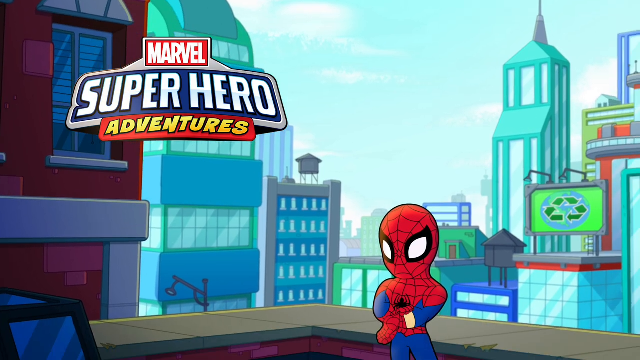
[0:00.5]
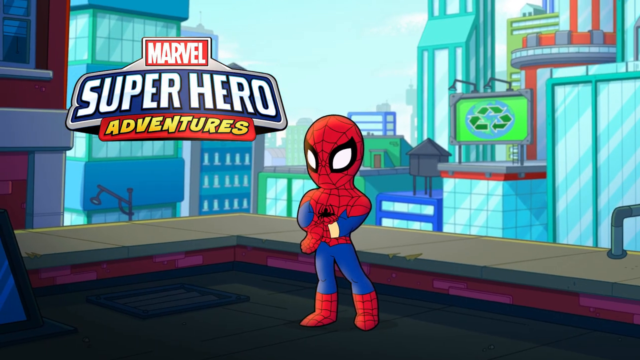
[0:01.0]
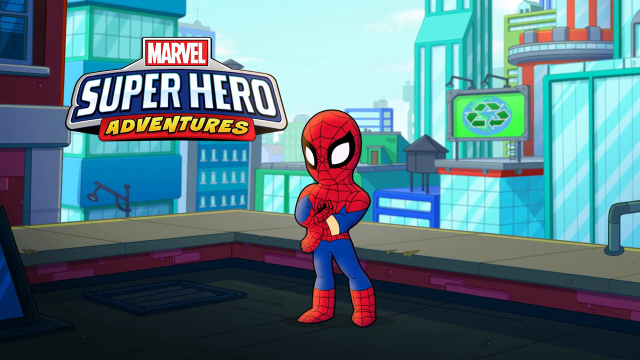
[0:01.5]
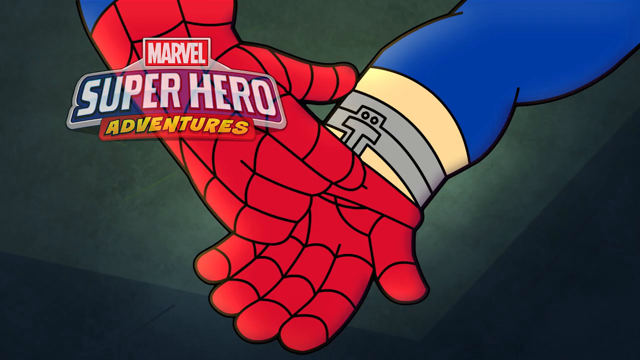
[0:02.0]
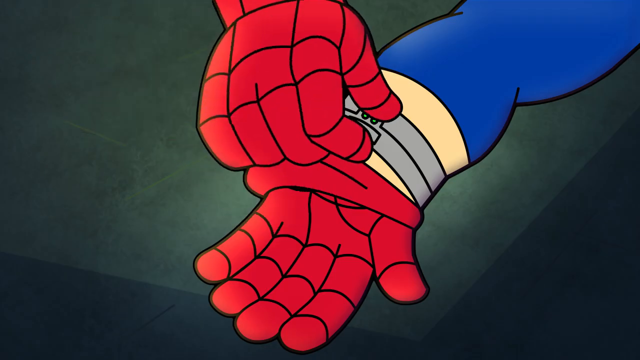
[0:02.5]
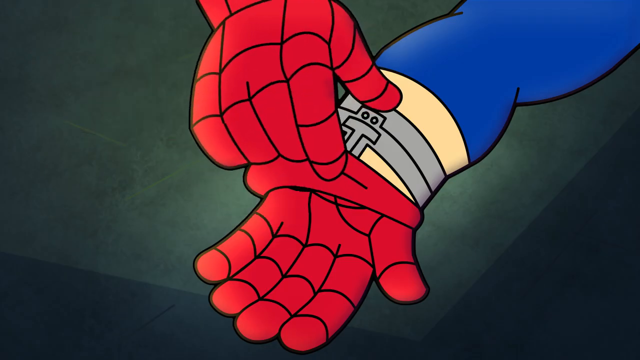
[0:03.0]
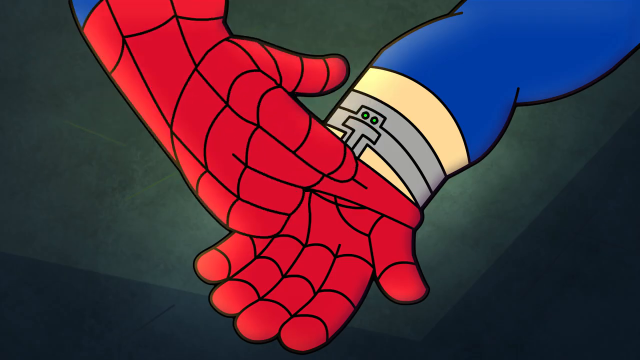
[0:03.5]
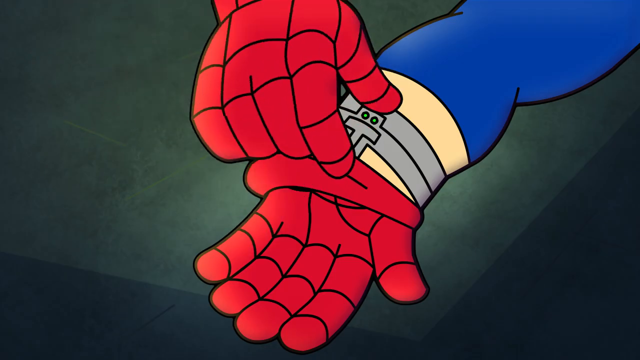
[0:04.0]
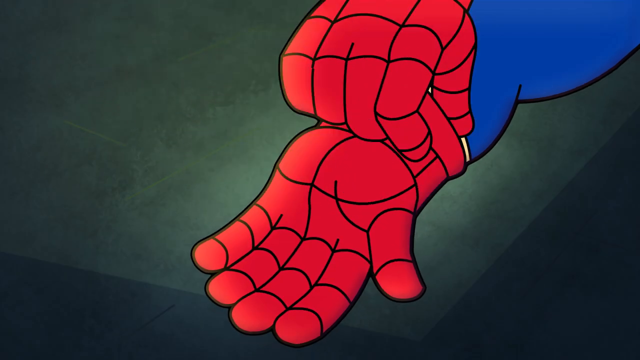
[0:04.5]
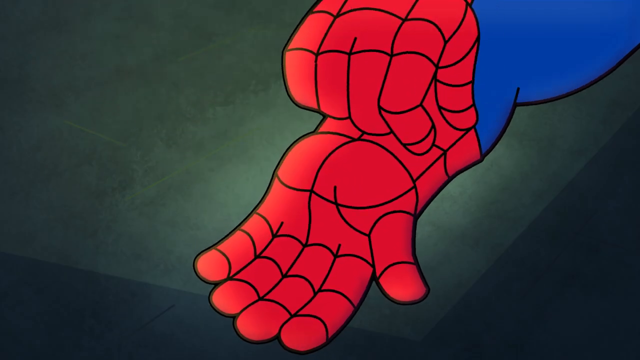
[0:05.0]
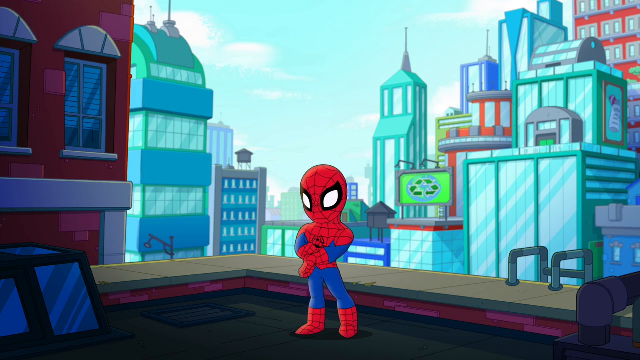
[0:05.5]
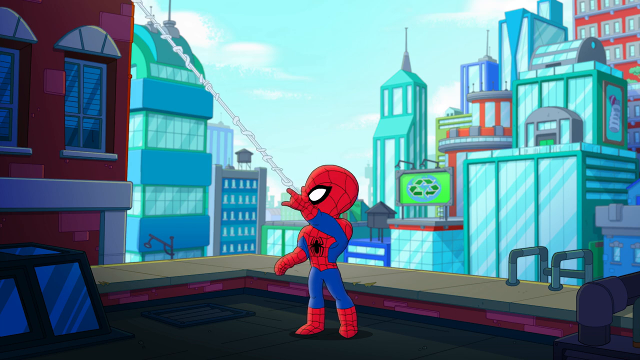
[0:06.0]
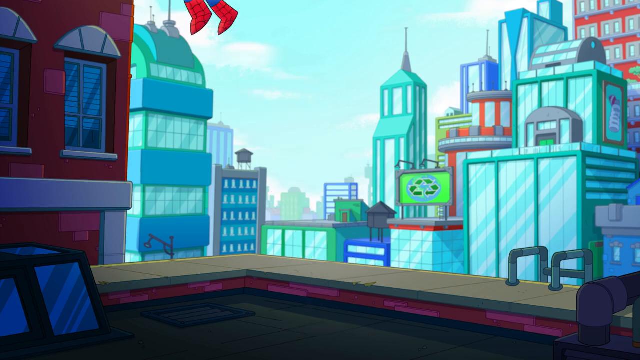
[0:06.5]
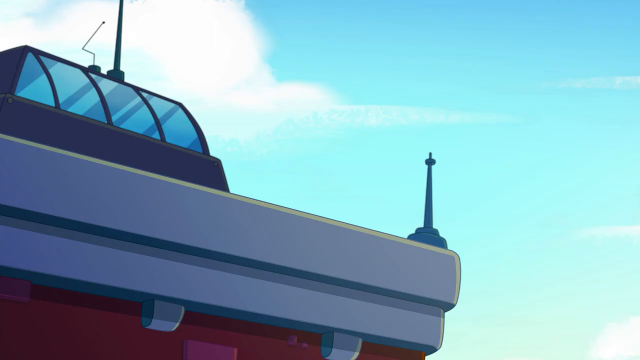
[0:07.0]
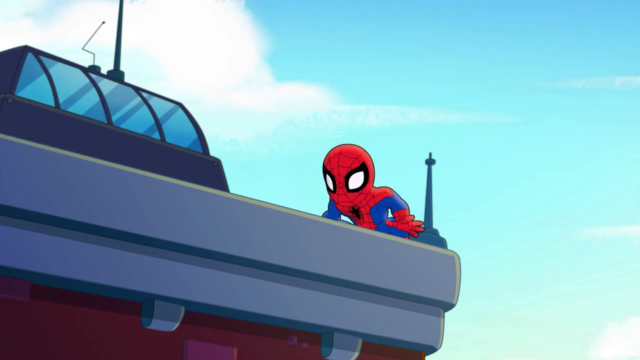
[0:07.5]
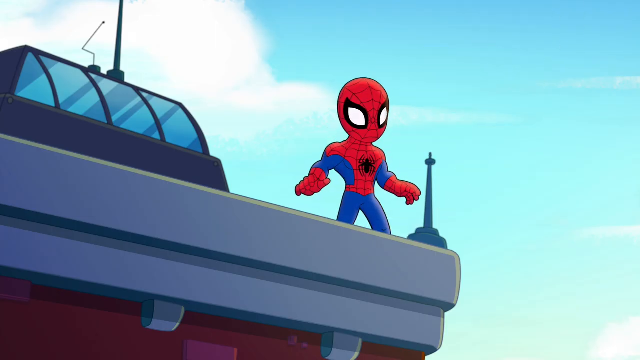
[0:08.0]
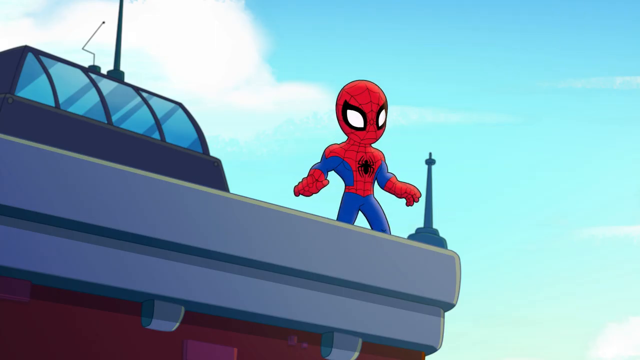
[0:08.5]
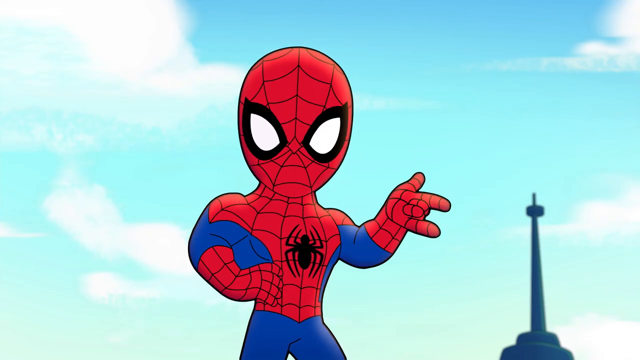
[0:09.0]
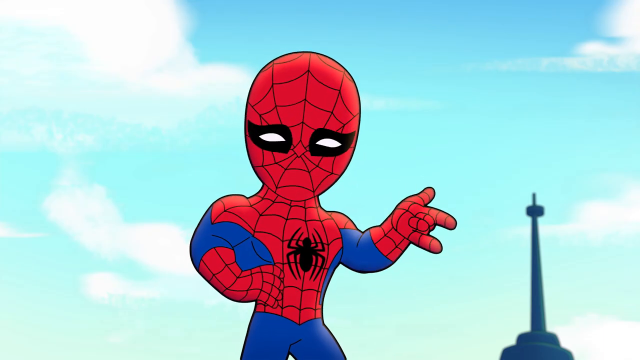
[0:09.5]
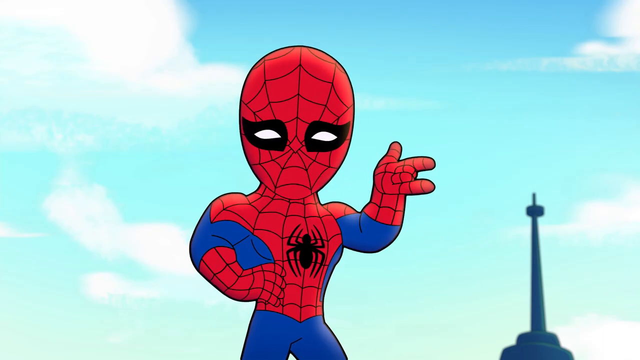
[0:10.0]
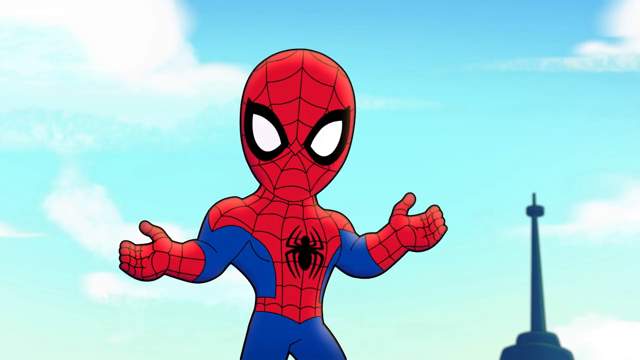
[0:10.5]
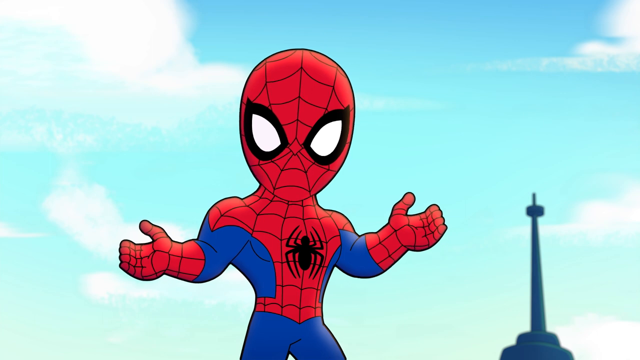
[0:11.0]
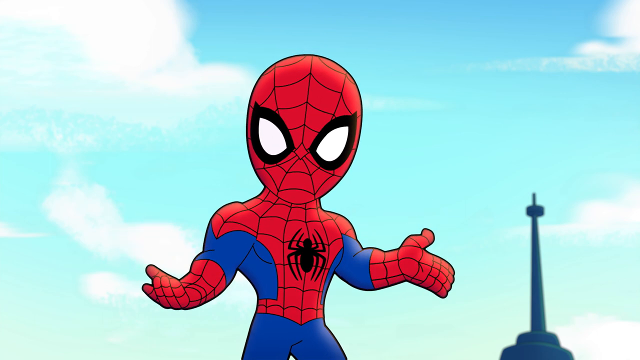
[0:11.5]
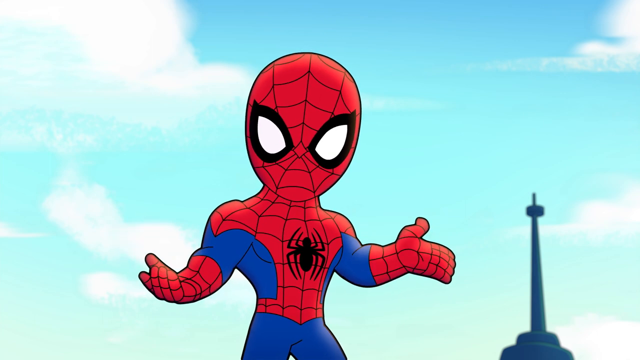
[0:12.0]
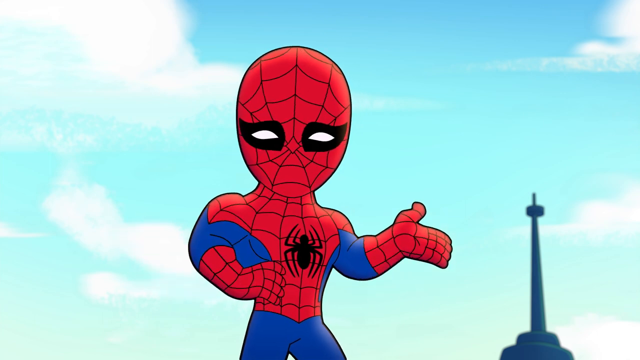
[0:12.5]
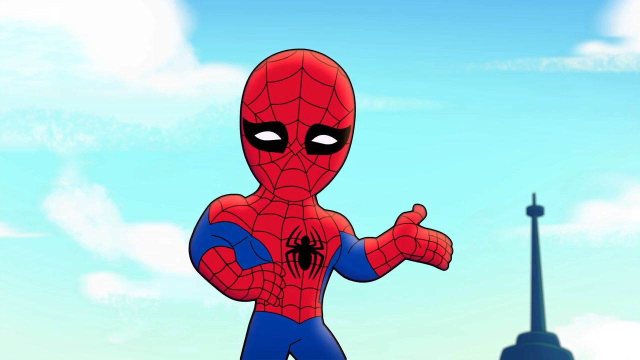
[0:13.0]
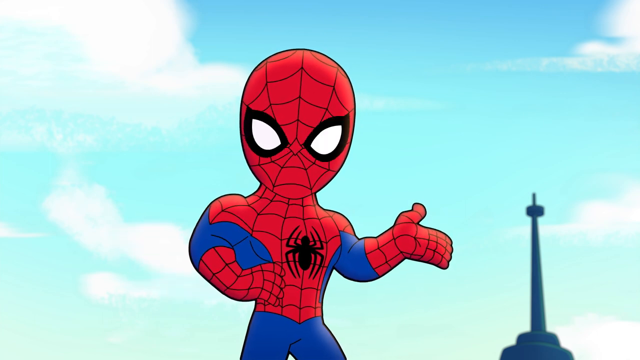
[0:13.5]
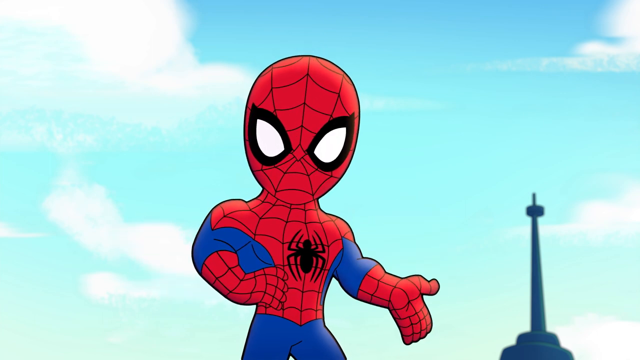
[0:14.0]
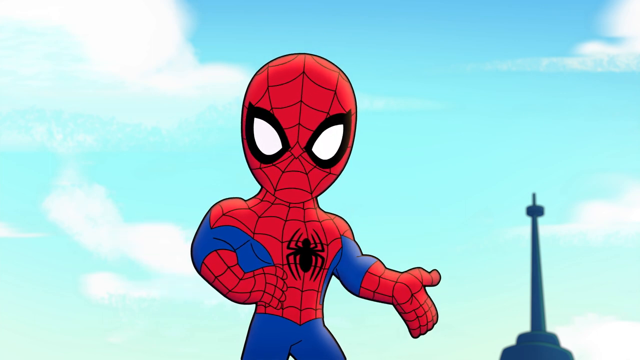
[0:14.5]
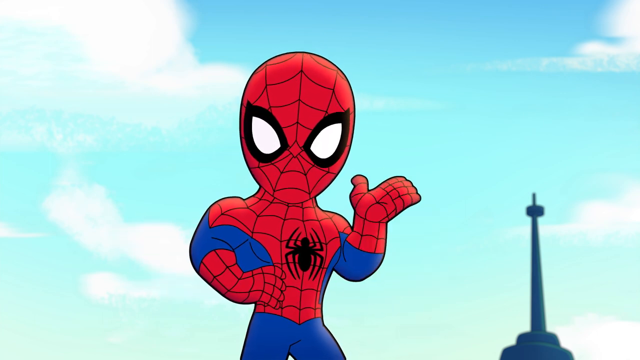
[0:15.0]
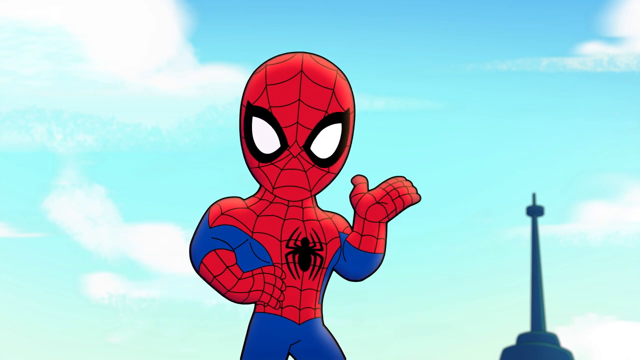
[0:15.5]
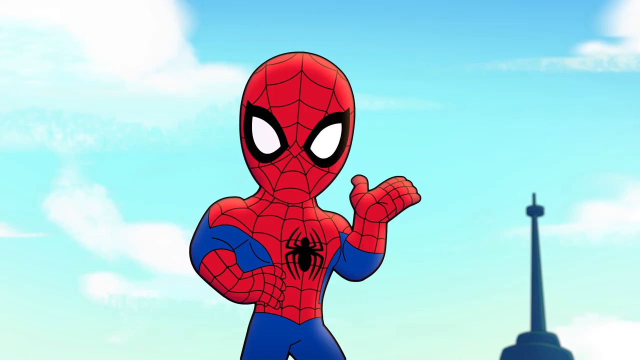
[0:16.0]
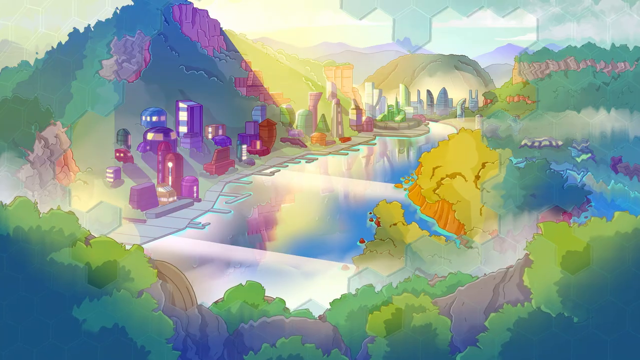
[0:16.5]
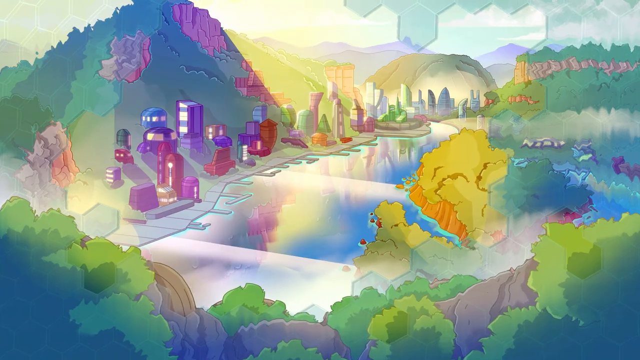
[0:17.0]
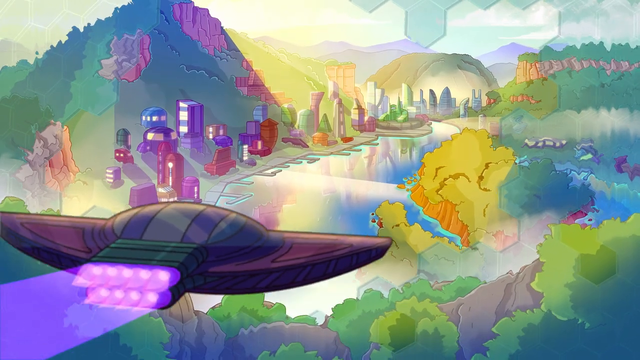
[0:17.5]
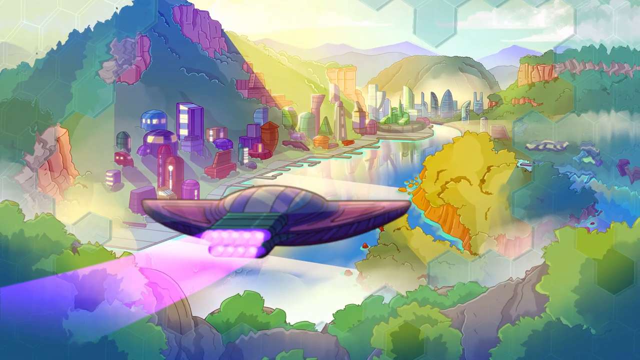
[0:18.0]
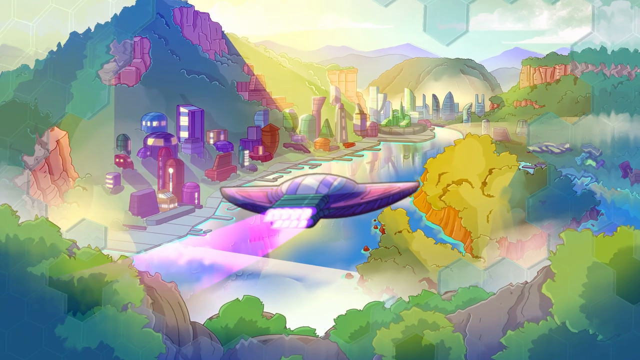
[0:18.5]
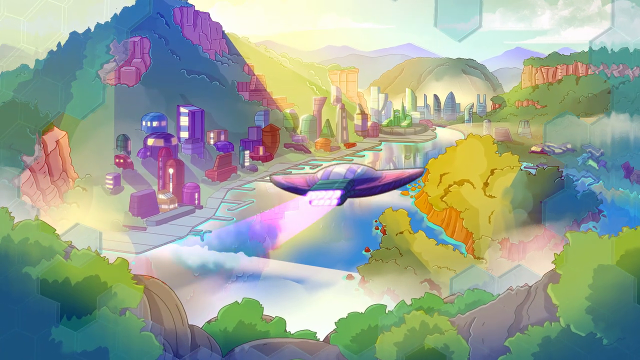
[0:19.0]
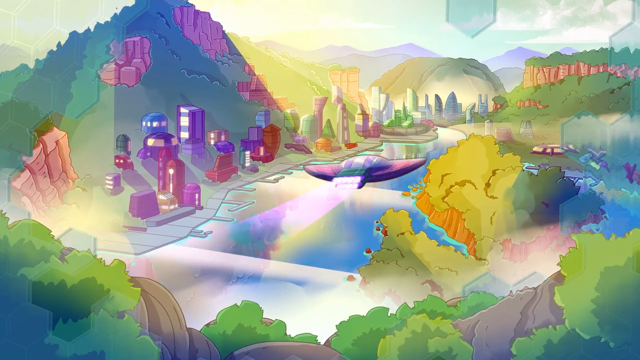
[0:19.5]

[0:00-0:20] The video is titled Marvel Superhero Adventures. A figure that looks like a young teenage creature in a Spider-Man suit stands on a rooftop. A close-up shows his wrist as he activates the spidey web, which he uses to shoot himself to the top of another building. There he turns and looks directly at the camera, closing and opening his eyes. The scene then shifts suddenly to a spaceship flying over a watery, wooded area toward a large city somewhat off in the distance. The spidey suit is blue and red with a spider on the chest, and his face is completely covered by a red webbed mask. Spidey seems to be preaching, and he appears to be a young Spidey with a giant head.